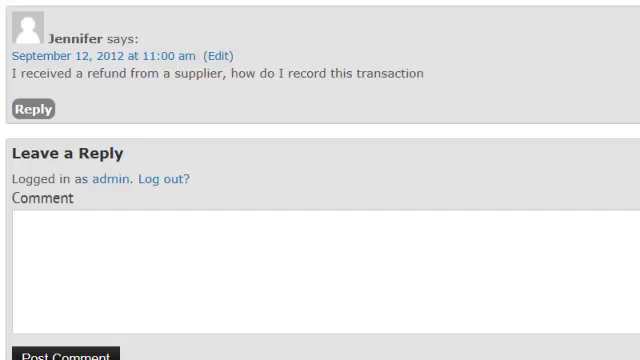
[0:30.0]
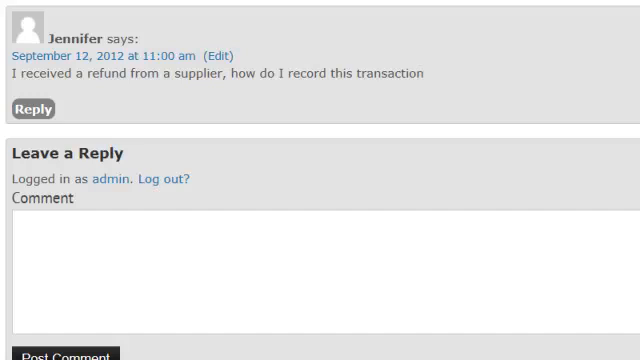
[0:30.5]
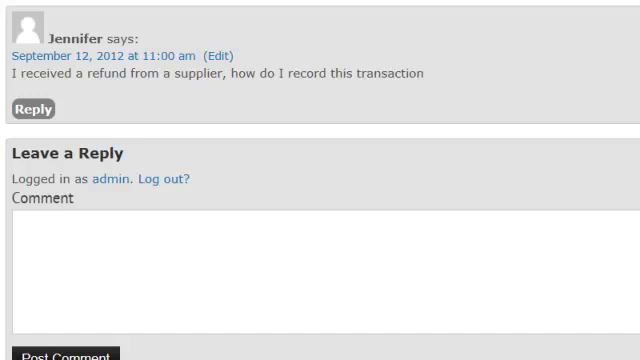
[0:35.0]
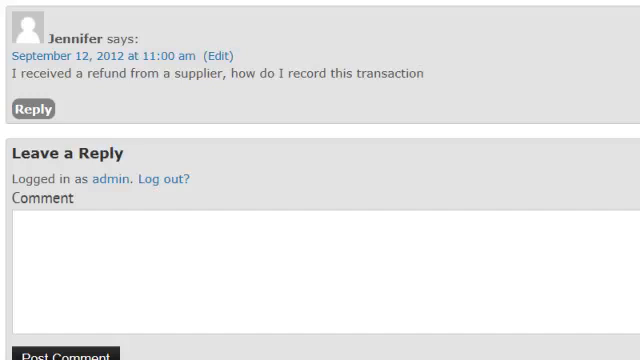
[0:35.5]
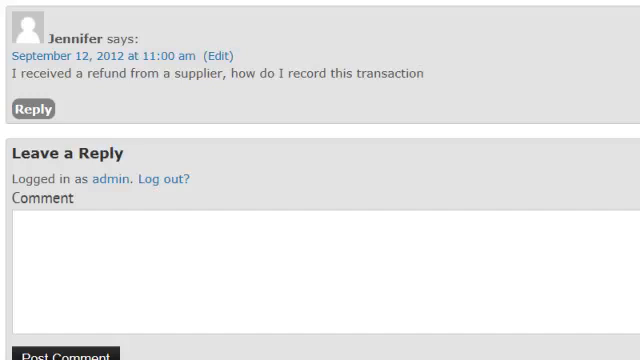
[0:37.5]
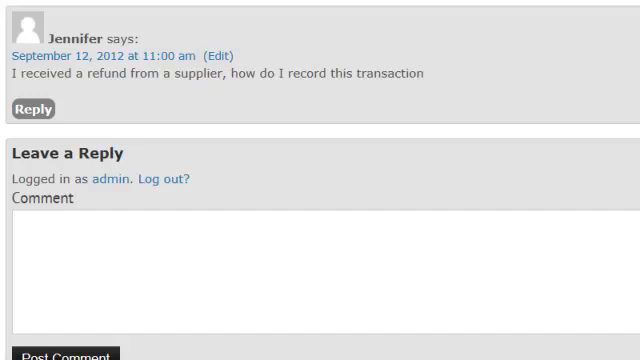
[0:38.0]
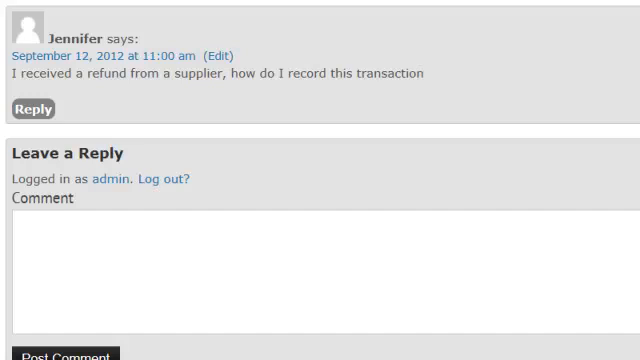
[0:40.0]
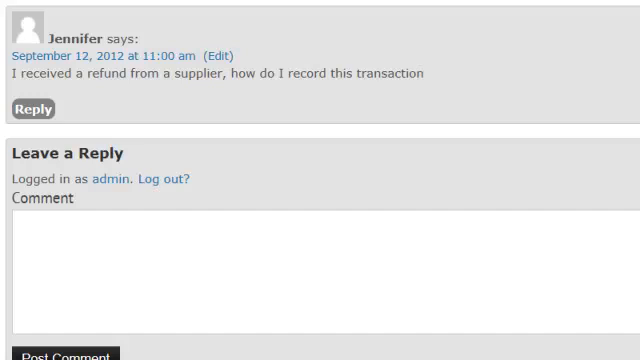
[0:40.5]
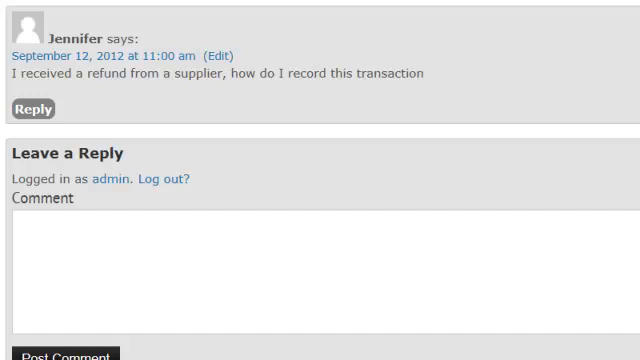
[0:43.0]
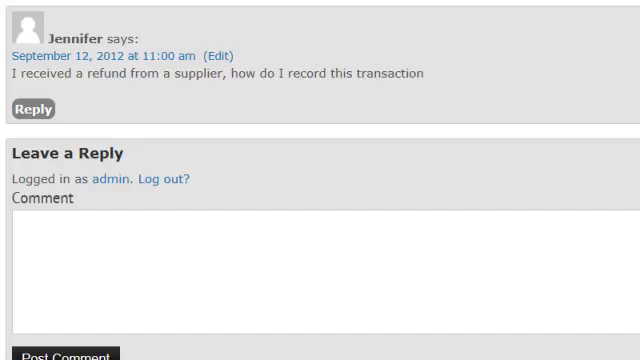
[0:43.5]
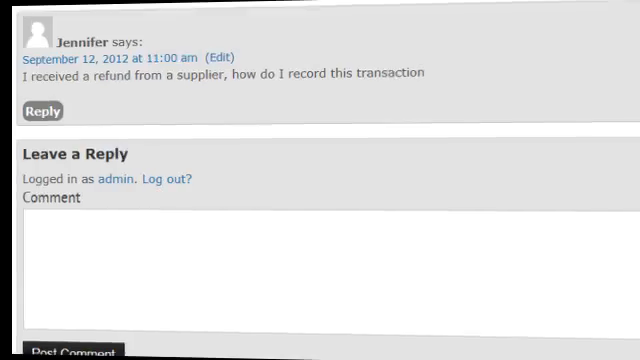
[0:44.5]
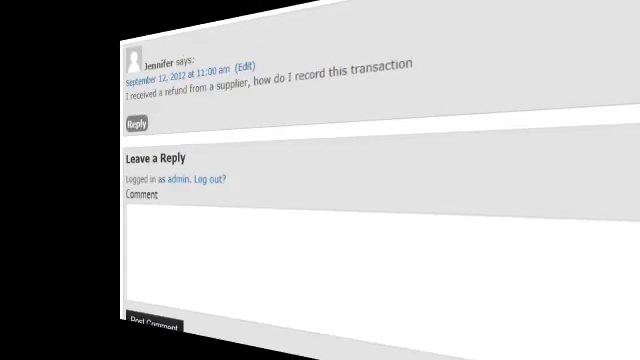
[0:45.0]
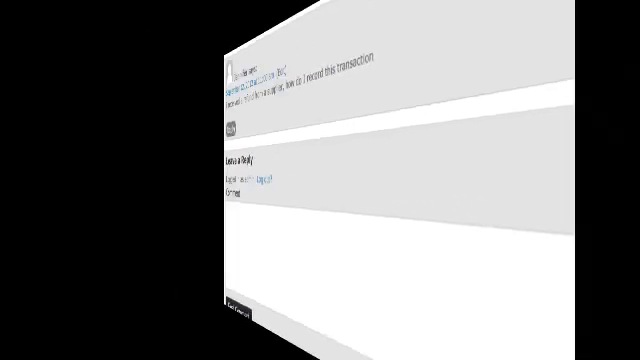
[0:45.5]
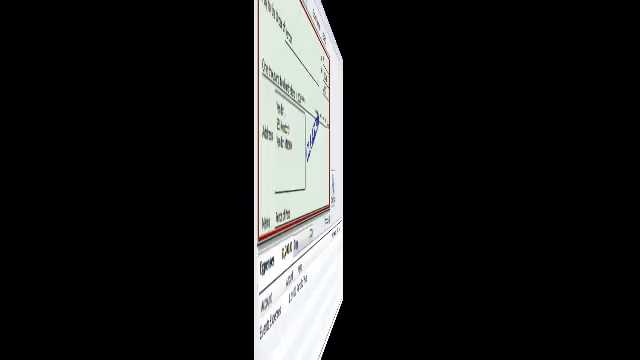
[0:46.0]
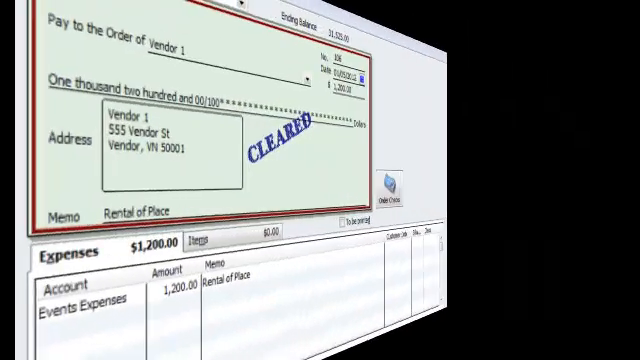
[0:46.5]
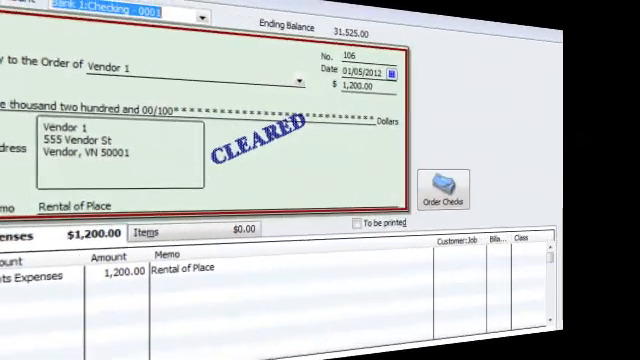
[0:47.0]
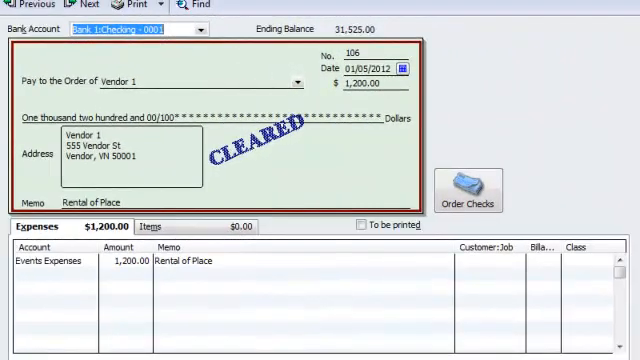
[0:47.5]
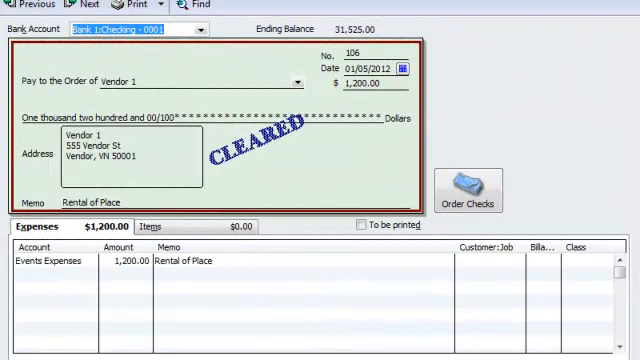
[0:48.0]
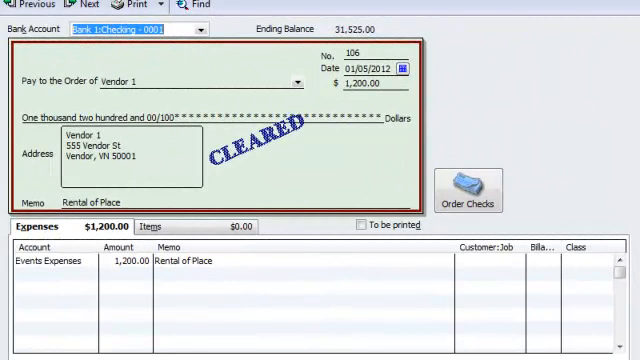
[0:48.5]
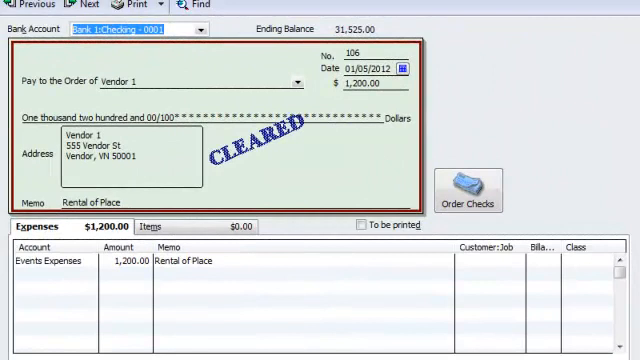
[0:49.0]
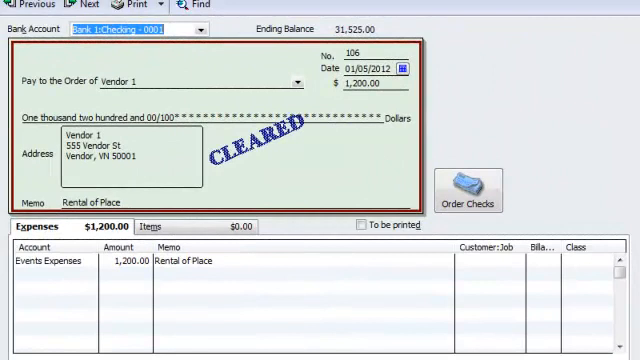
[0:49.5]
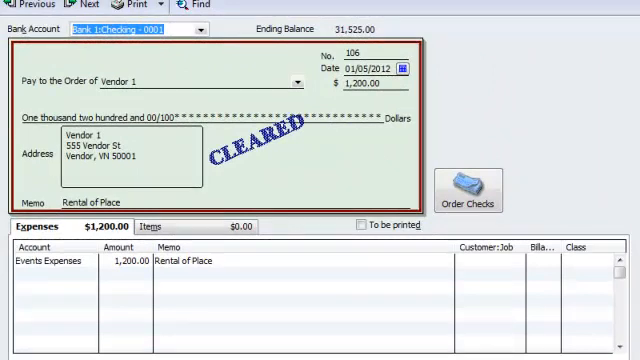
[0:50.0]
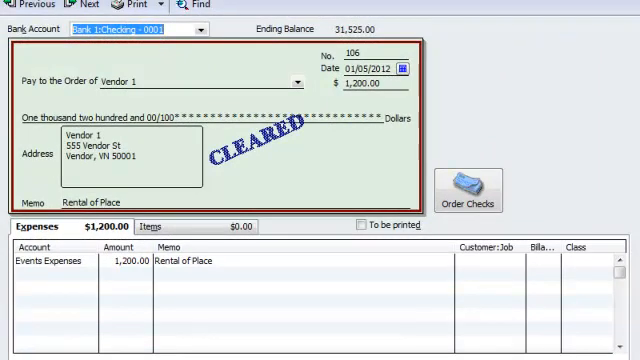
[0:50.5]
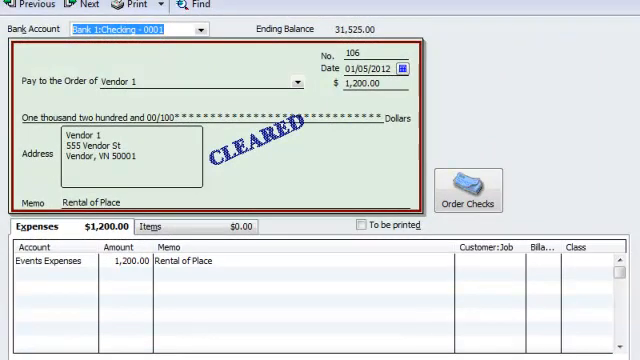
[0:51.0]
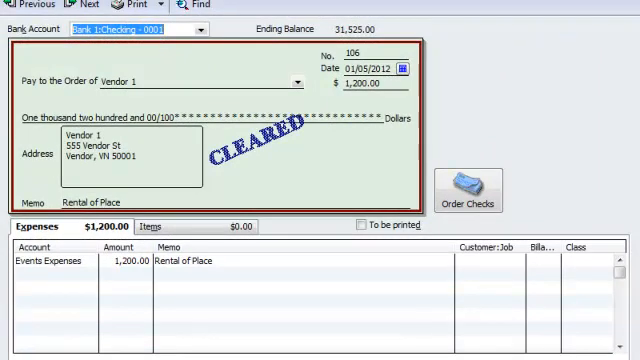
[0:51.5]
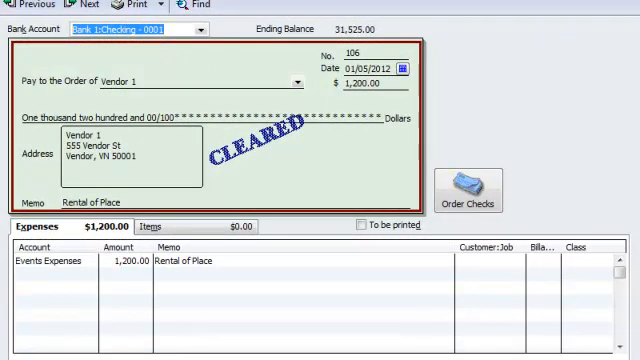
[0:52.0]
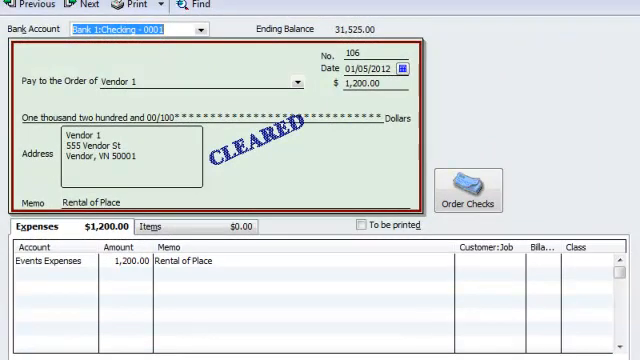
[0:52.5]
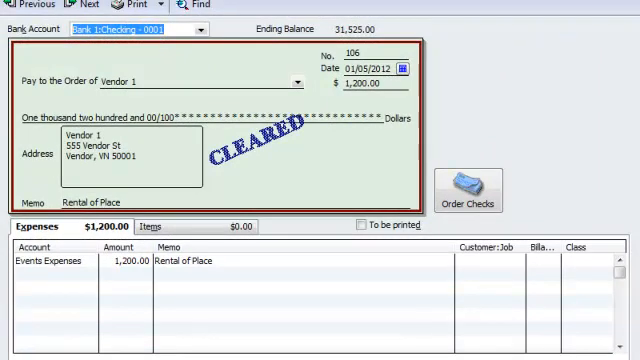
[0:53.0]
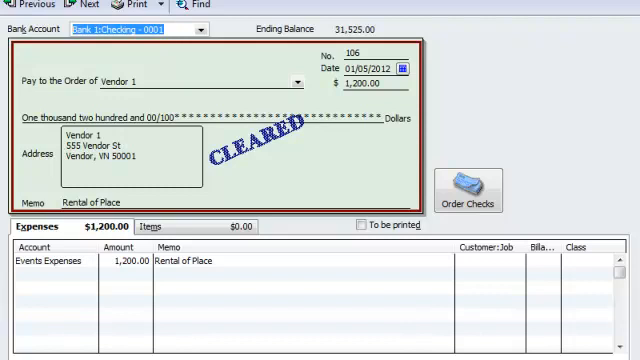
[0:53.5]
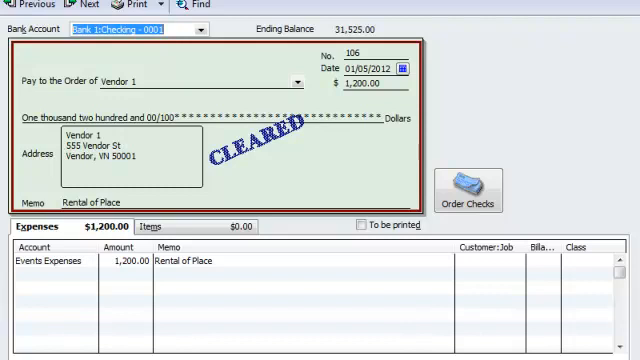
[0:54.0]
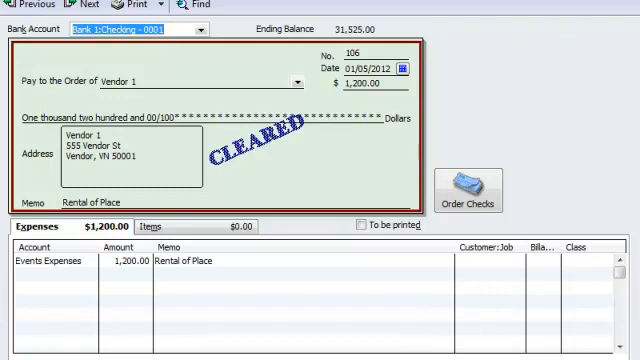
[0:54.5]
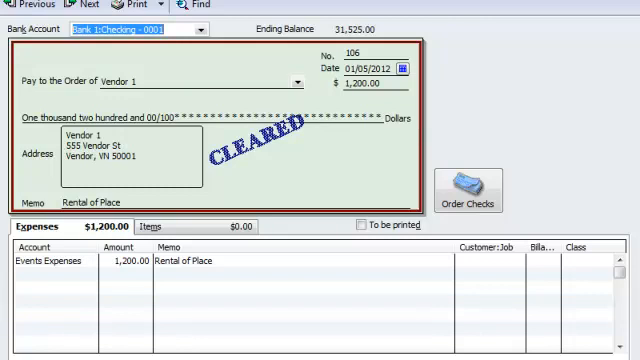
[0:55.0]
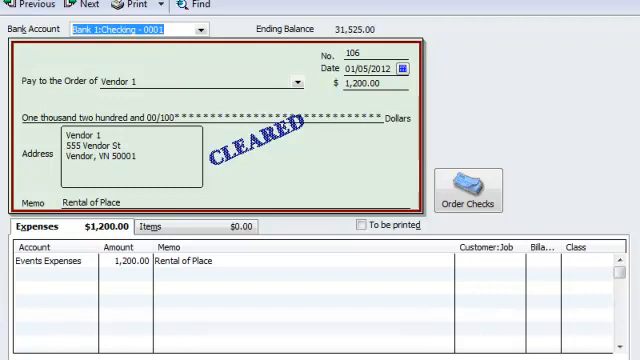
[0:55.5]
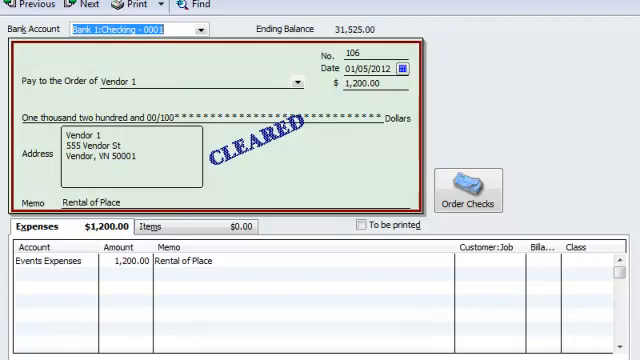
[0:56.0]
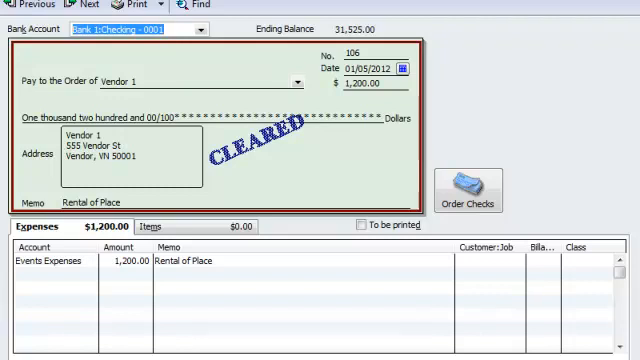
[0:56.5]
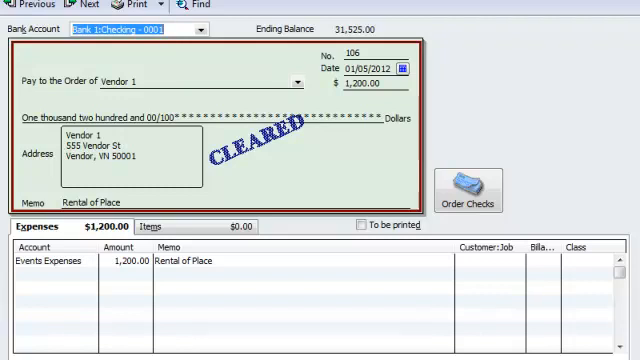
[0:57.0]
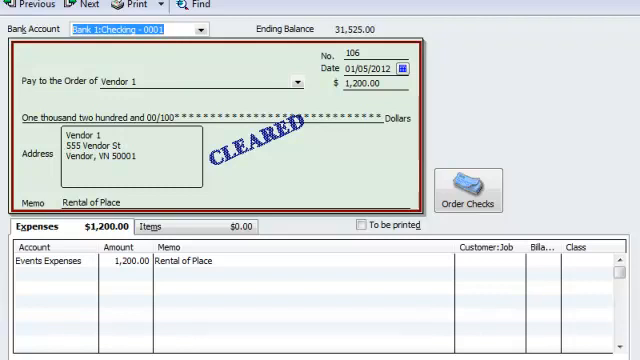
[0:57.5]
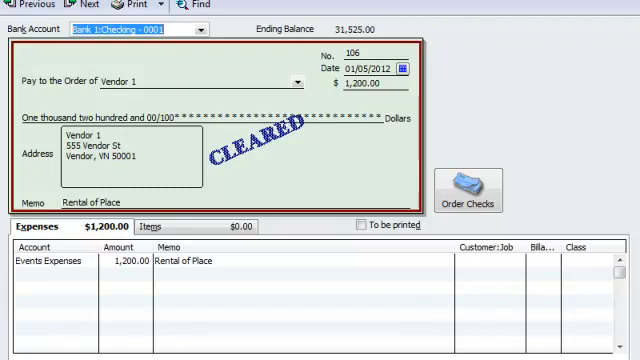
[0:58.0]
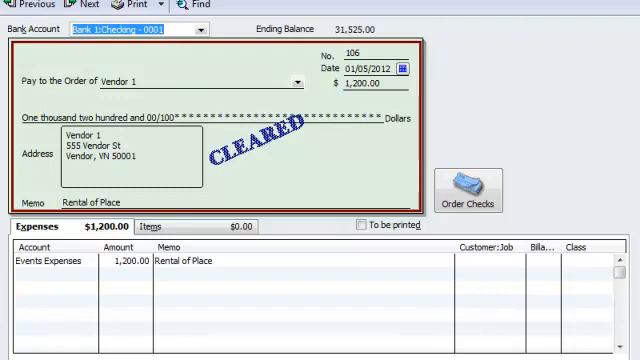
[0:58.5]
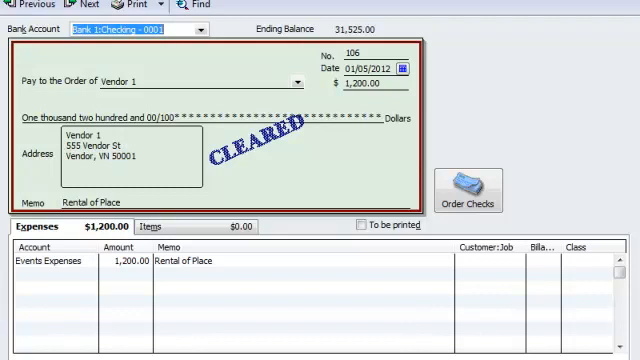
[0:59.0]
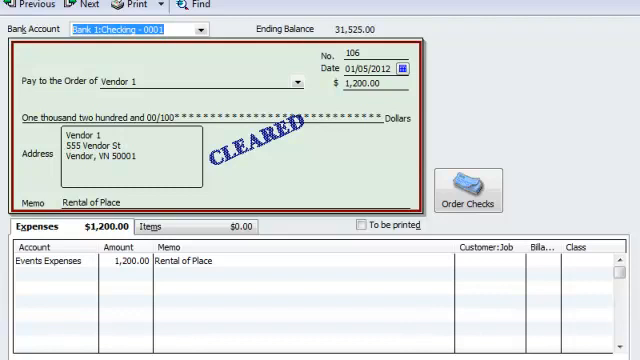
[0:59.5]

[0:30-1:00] A conversation on what appears to be some kind of blog shows a comment by Jennifer dated September 12th, 2012, at 11am. In the comment, Jennifer says she received a refund from a supplier and does not know how to record the transaction, and asks how to do so. Jennifer seemingly has no profile picture, and there is a reply button just below the comment. The date can be edited, and there is an option to leave a reply in a comment box. Another image follows, apparently of some kind of rental place, showing a check made for the vendor with a value of $1,200, along with a memo on the check and what the check is paying for. This is in some kind of program.